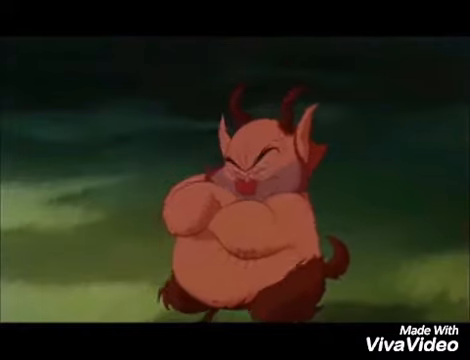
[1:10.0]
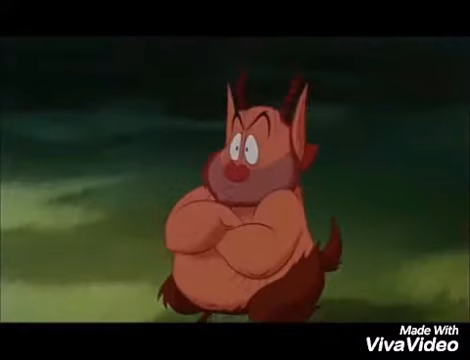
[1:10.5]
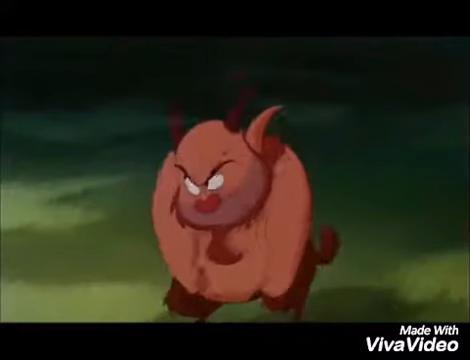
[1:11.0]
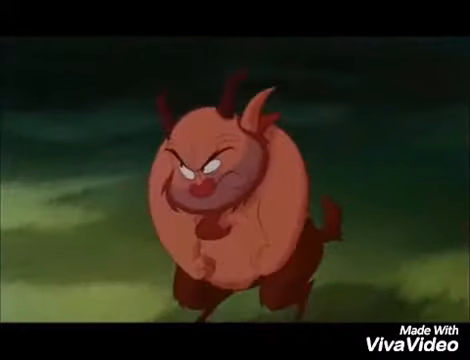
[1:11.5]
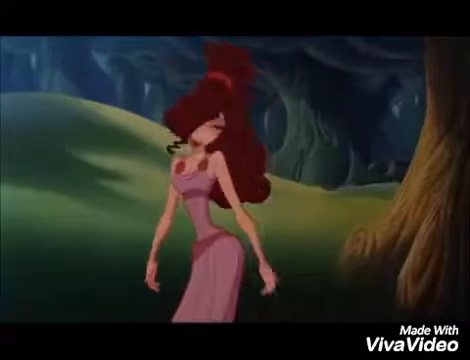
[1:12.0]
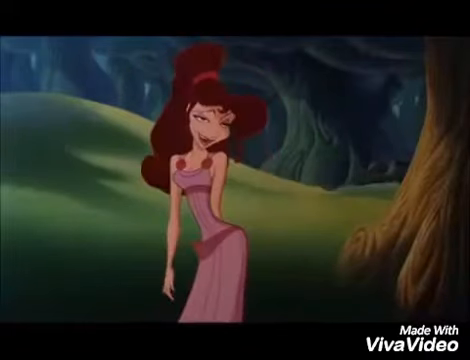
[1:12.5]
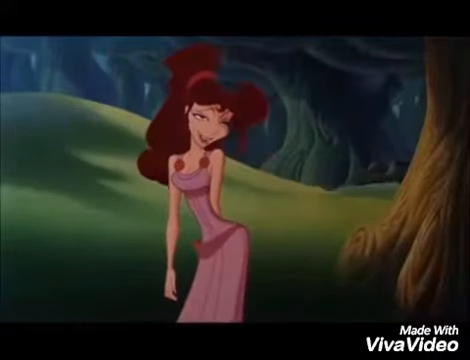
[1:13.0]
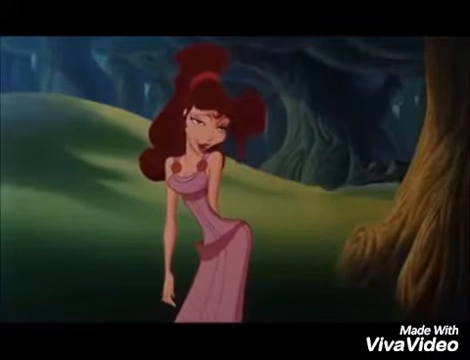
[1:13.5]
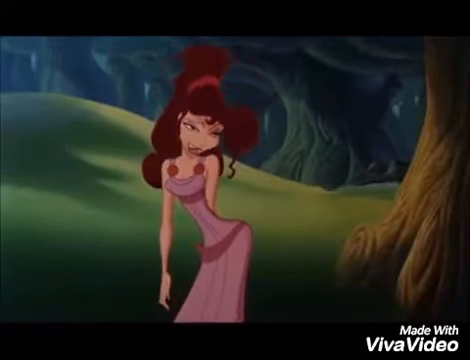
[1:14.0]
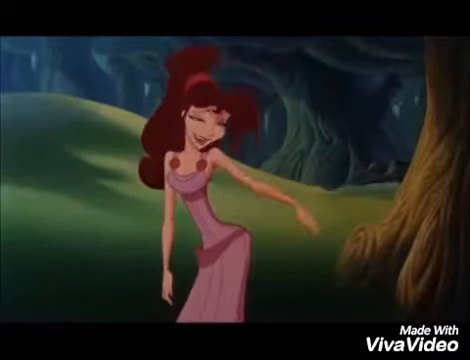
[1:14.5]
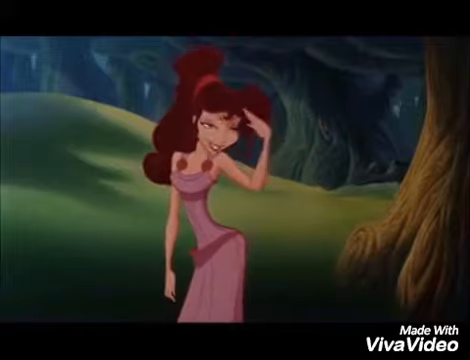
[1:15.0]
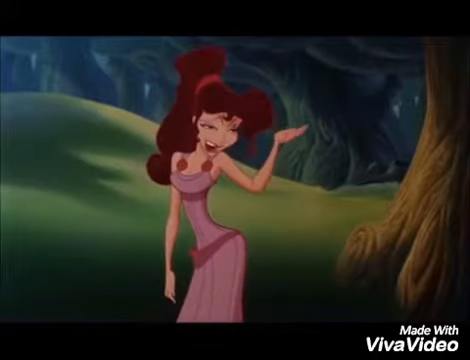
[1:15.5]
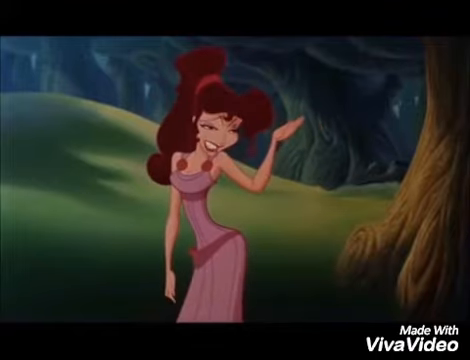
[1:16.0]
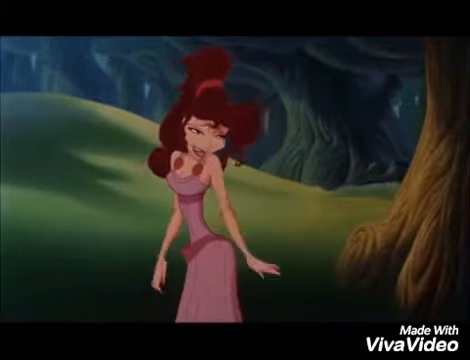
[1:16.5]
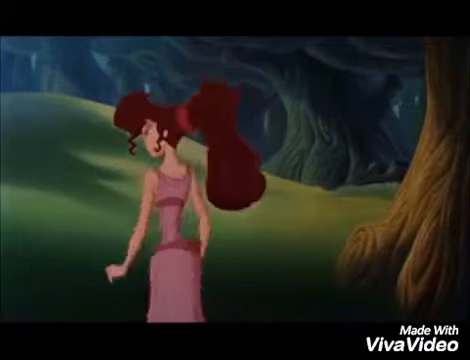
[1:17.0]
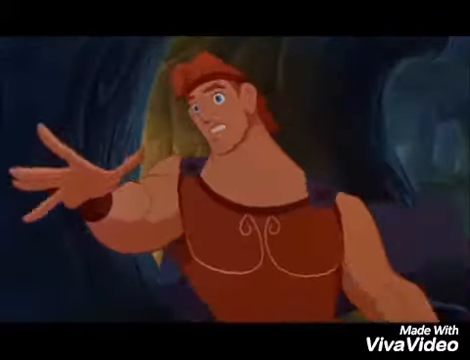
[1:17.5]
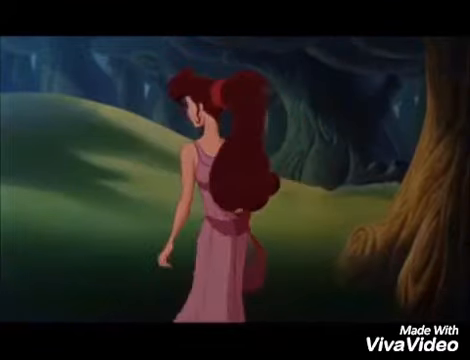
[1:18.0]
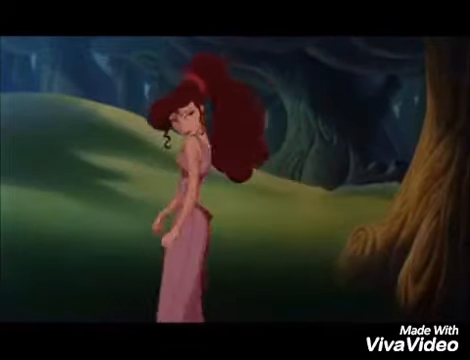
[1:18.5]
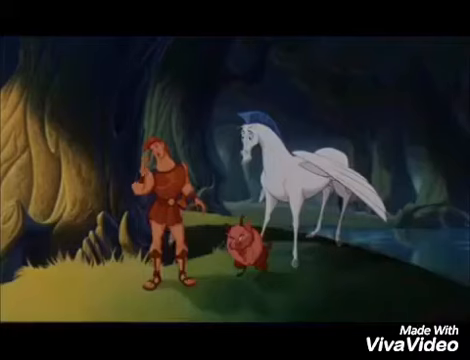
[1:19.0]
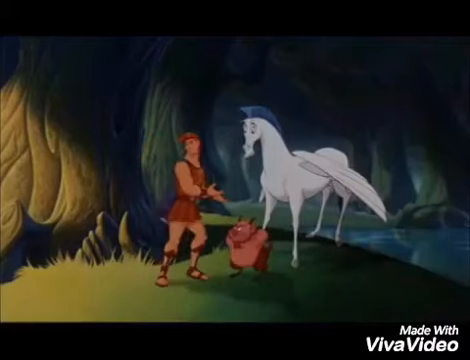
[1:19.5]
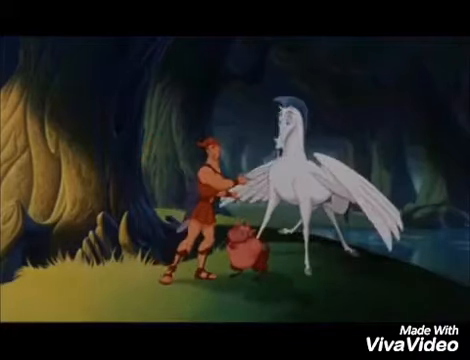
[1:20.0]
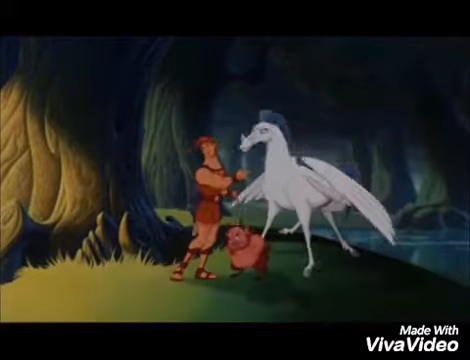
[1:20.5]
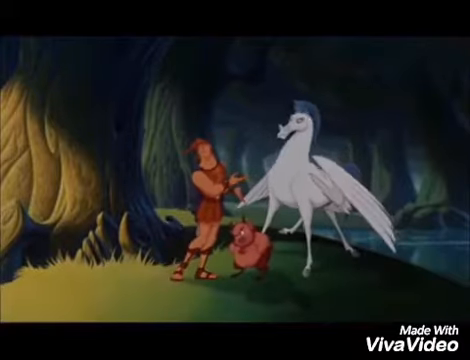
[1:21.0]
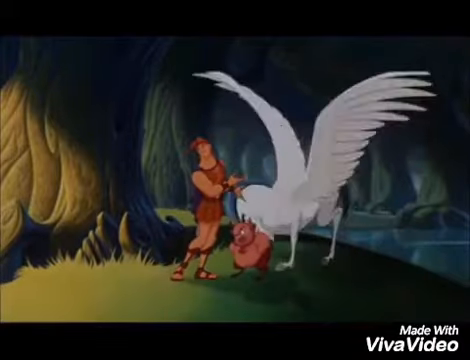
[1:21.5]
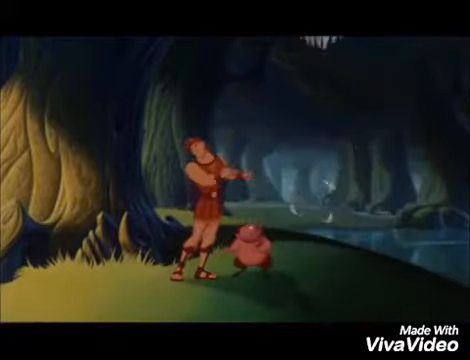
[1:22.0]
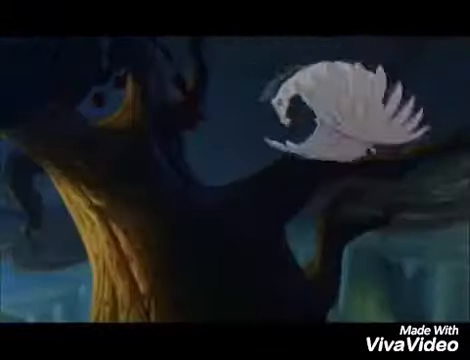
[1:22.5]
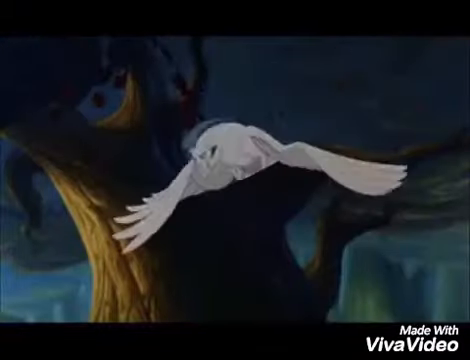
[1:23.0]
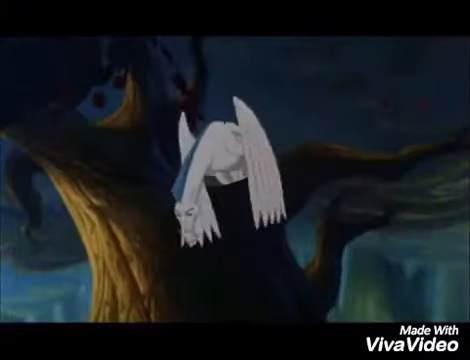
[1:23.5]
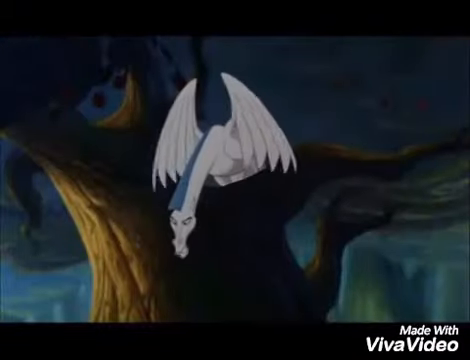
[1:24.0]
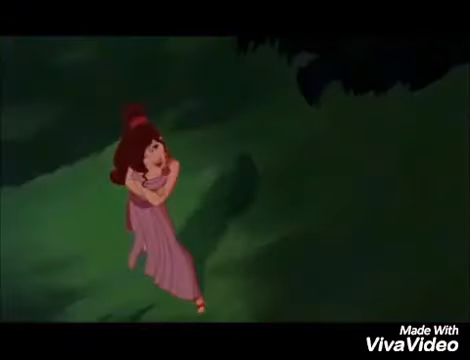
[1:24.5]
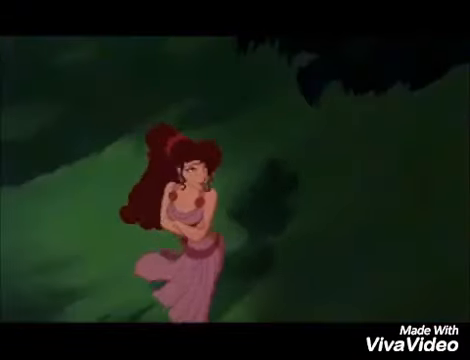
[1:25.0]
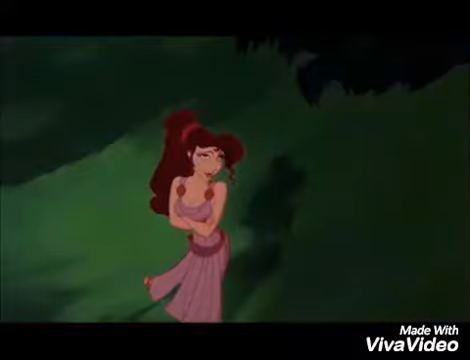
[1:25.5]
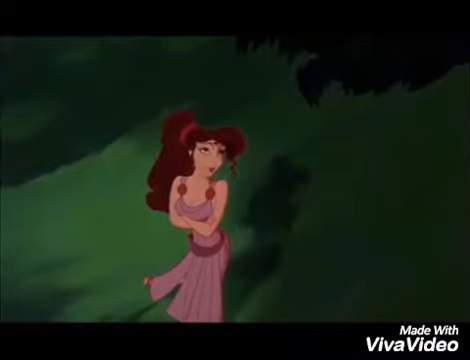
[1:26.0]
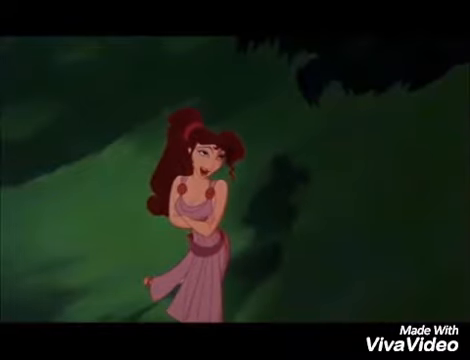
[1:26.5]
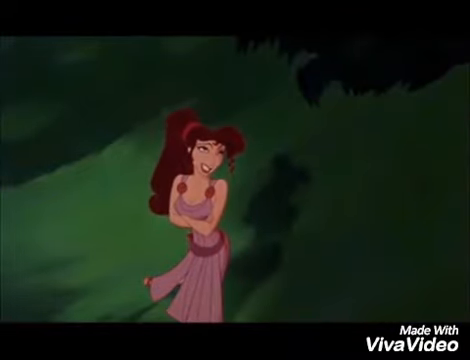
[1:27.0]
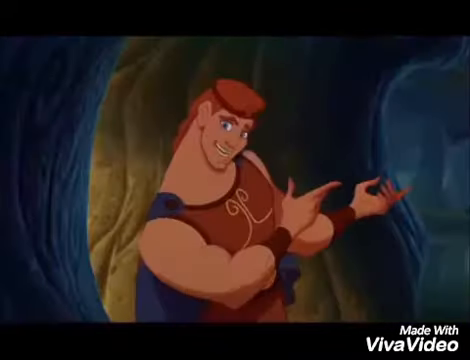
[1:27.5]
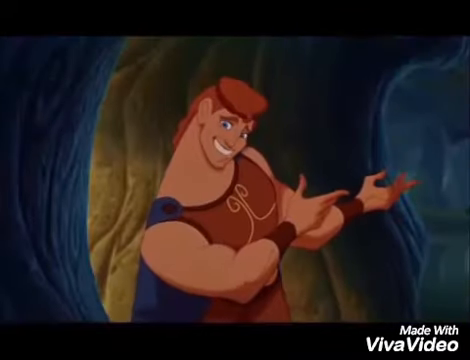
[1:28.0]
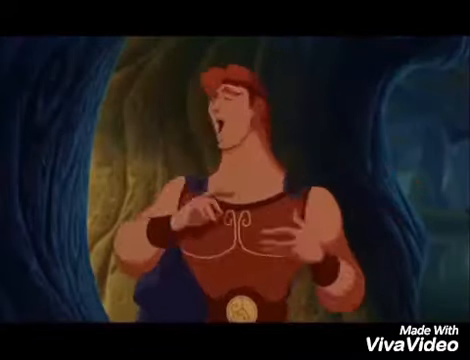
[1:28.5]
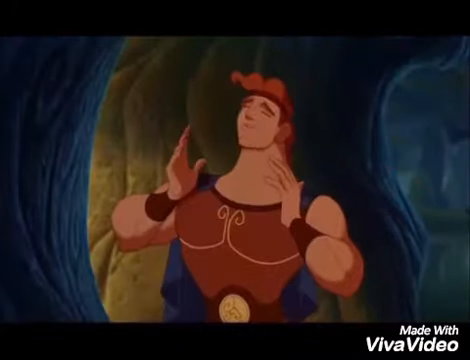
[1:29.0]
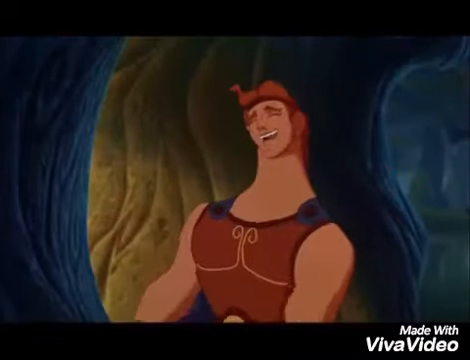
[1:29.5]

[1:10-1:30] The short creature with two horns on his head and a beard stands with his arms crossed, looking angry; he opens his eyes very widely and starts to rage. The shot cuts to the beautiful lady with long hair and dark brown skin waving her hand. She is about to leave, and the guy tells her to wait, maybe pointing to the white horse with the wings and the mohawk, possibly telling her to wait for the horse to take her wherever she is going. Immediately the horse flies up and lands on top of the tree, and the lady looks up. The guy points to the side as if the horse were there, but it is not. He points again, maybe trying to convince her to go with the horse, and uses his thumb to indicate the horse, which is not there.